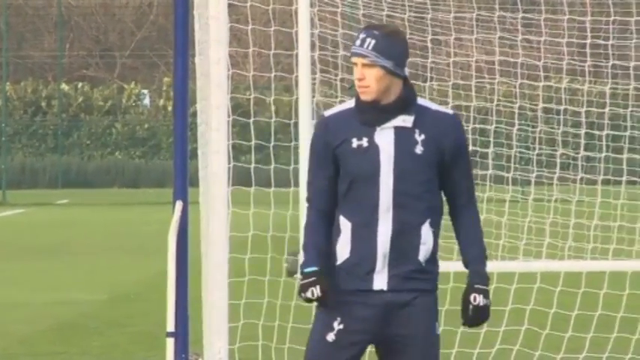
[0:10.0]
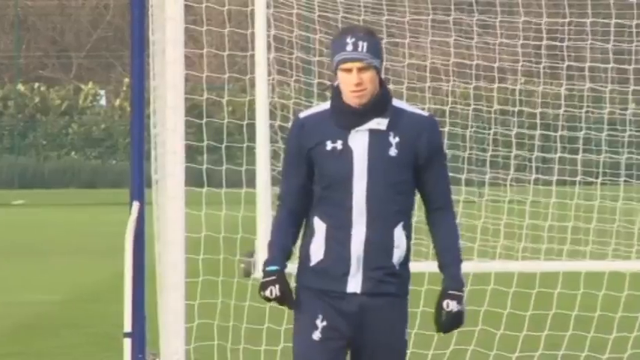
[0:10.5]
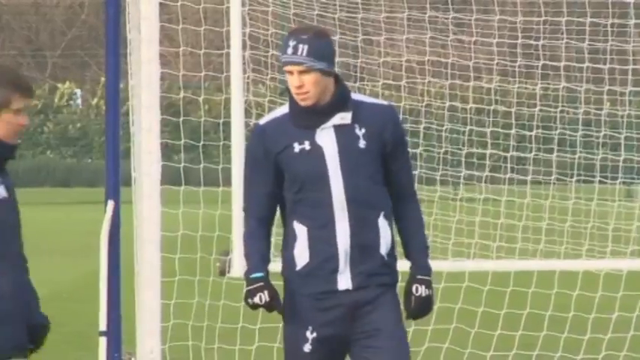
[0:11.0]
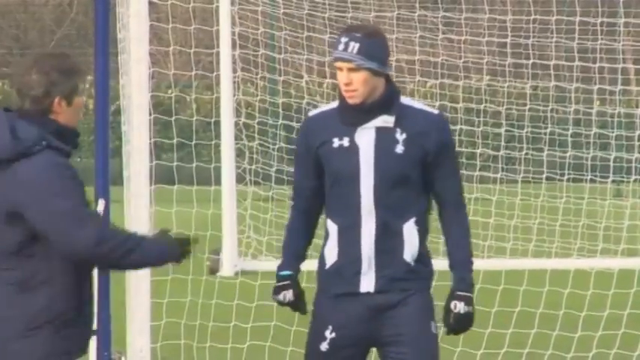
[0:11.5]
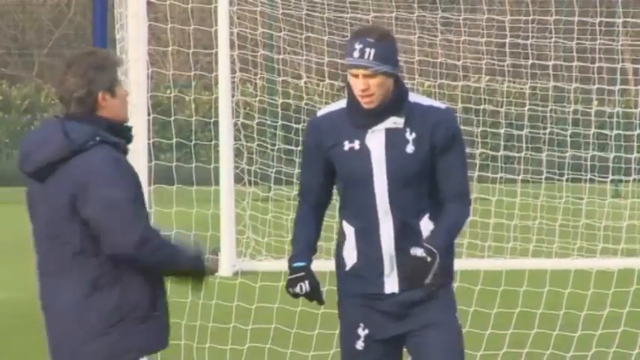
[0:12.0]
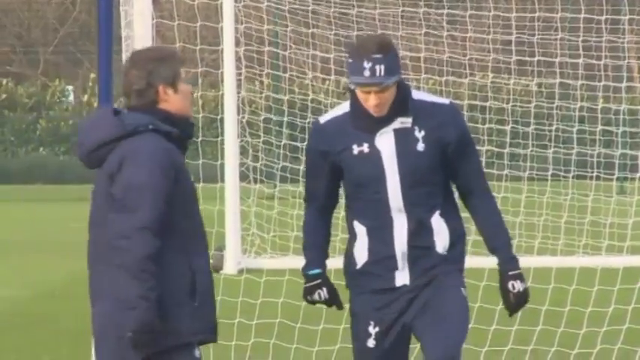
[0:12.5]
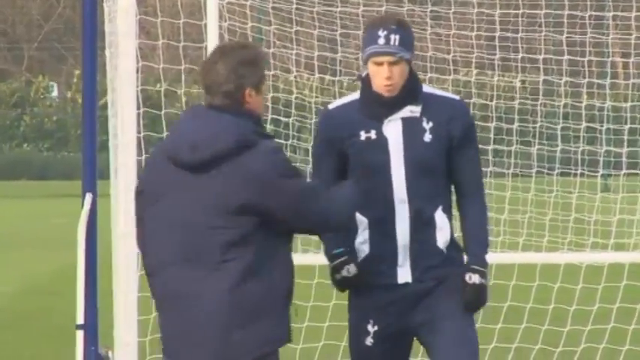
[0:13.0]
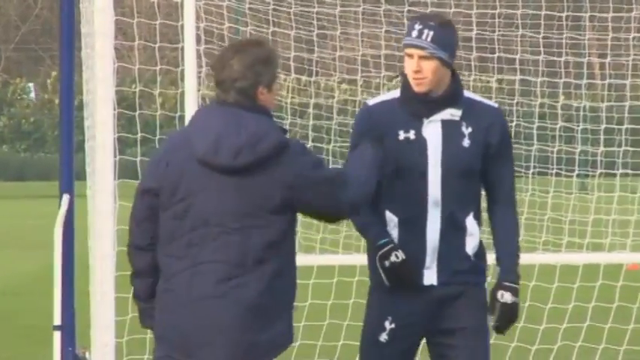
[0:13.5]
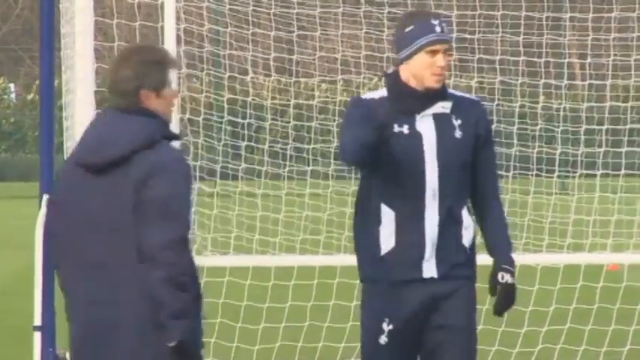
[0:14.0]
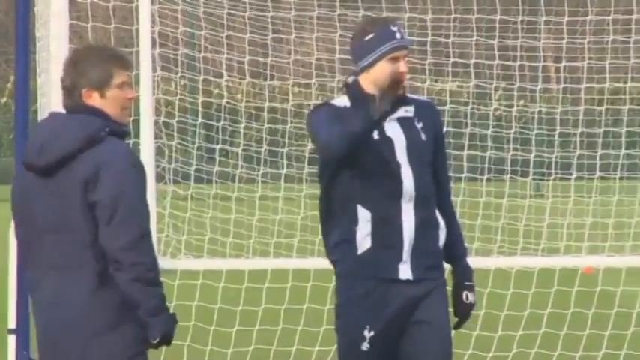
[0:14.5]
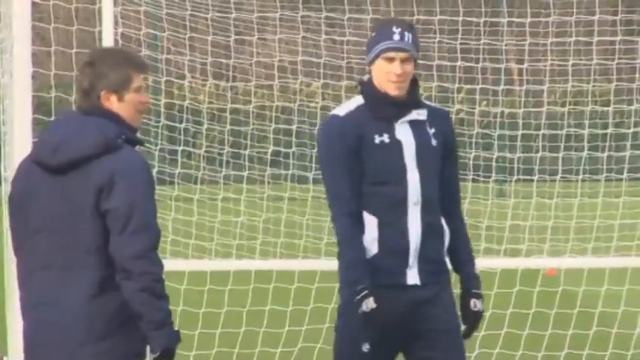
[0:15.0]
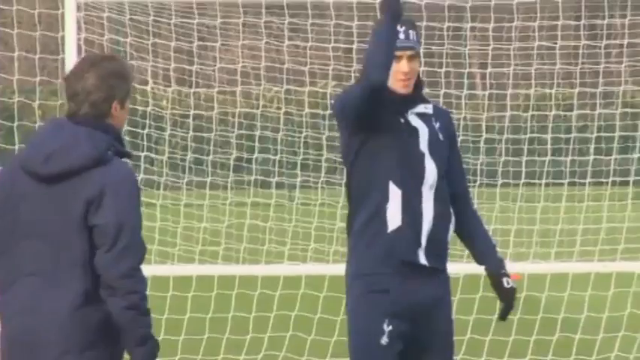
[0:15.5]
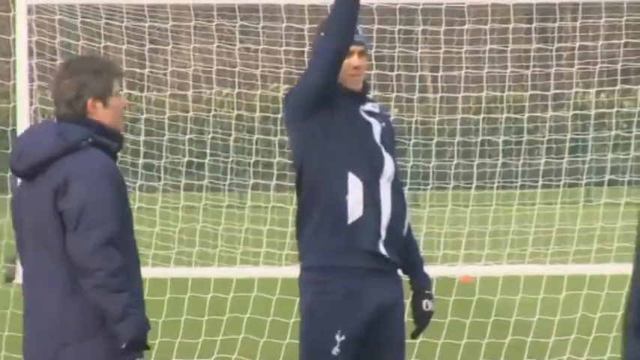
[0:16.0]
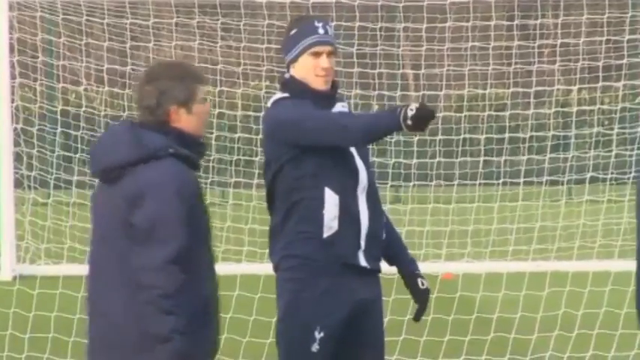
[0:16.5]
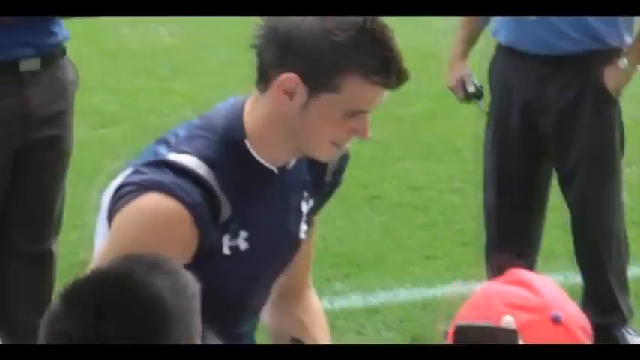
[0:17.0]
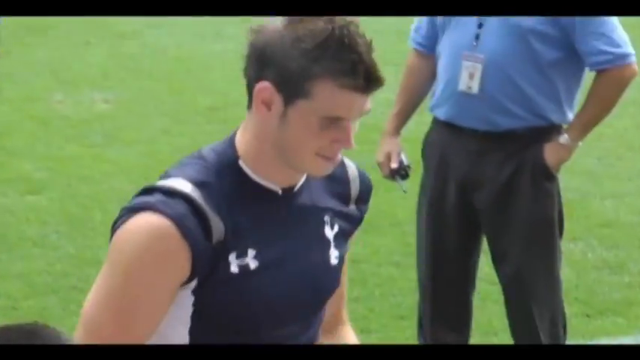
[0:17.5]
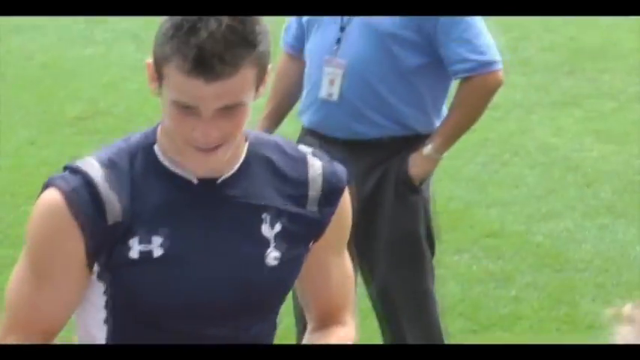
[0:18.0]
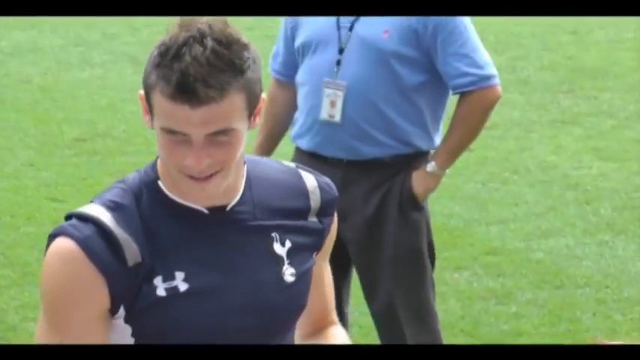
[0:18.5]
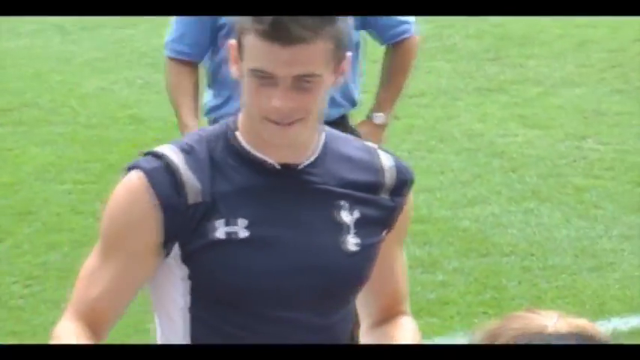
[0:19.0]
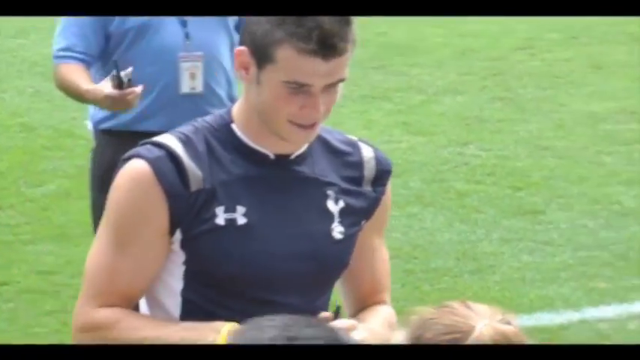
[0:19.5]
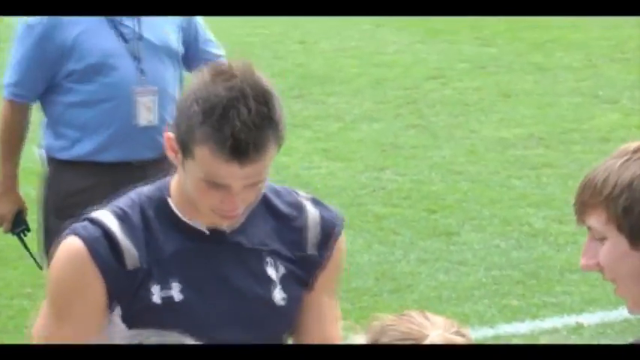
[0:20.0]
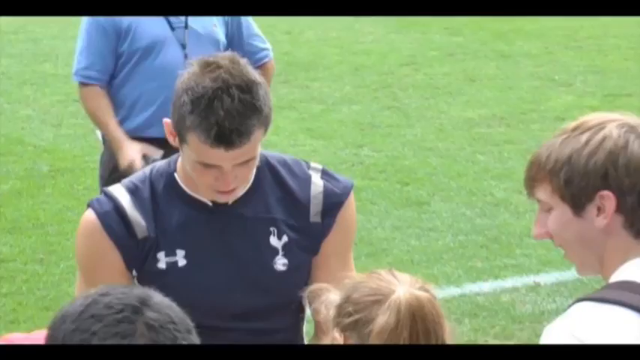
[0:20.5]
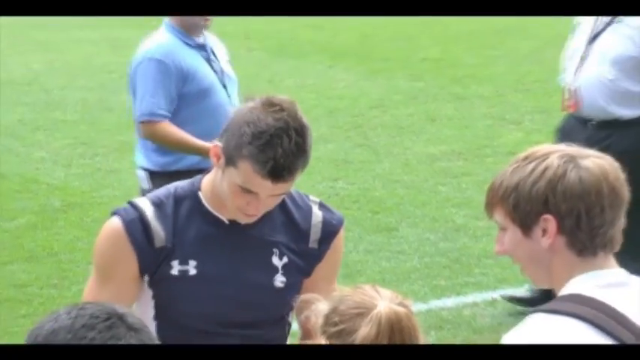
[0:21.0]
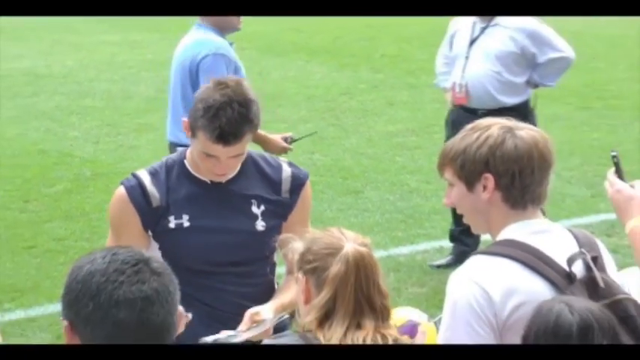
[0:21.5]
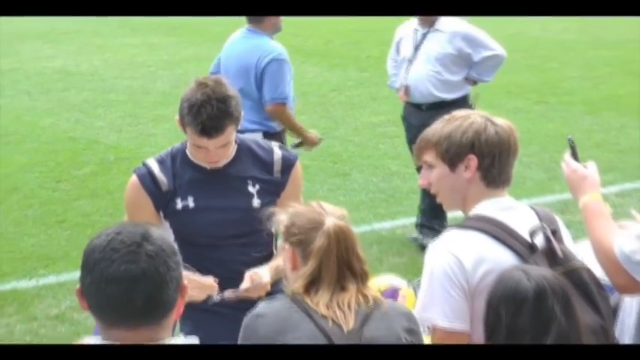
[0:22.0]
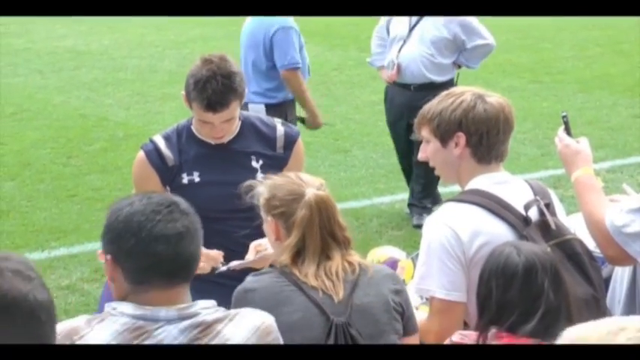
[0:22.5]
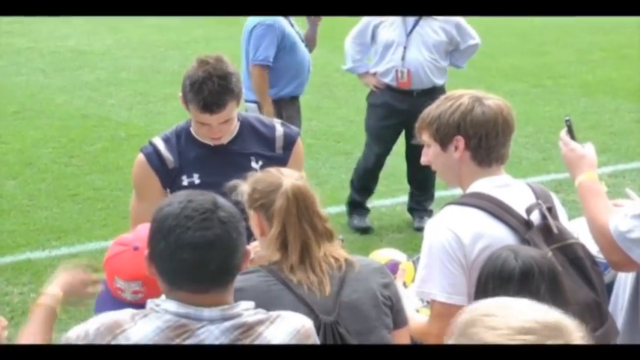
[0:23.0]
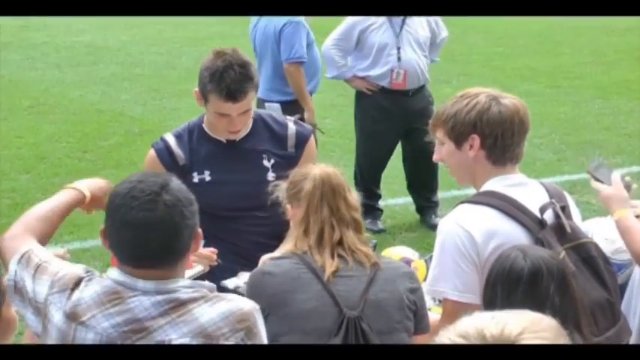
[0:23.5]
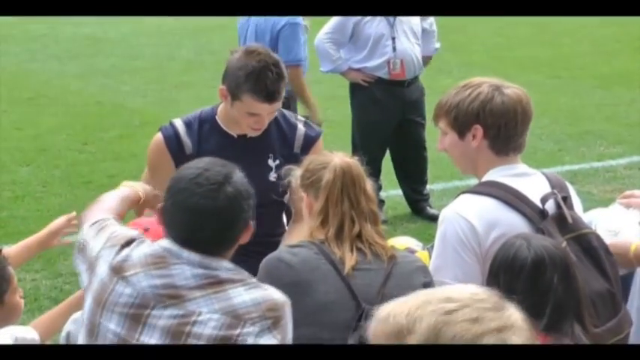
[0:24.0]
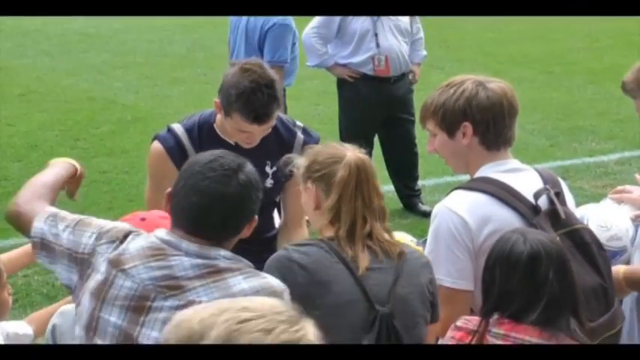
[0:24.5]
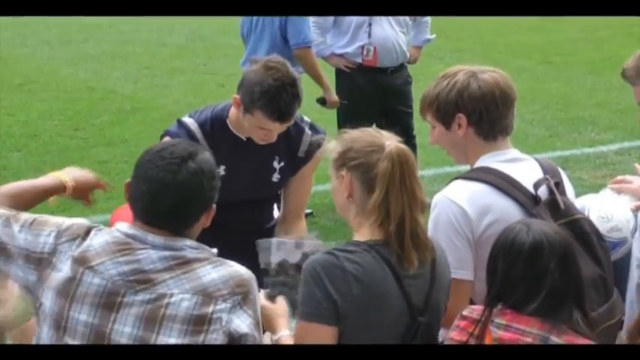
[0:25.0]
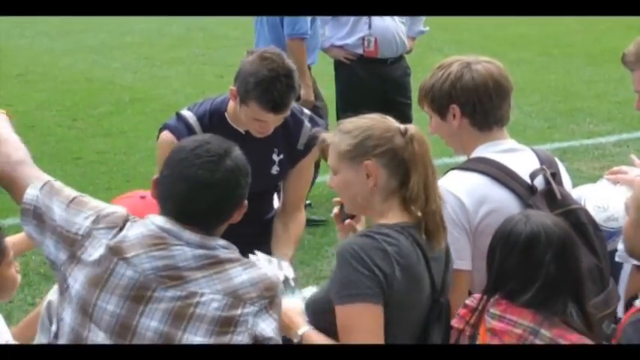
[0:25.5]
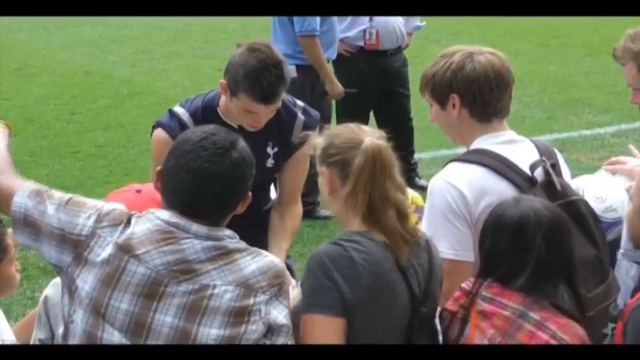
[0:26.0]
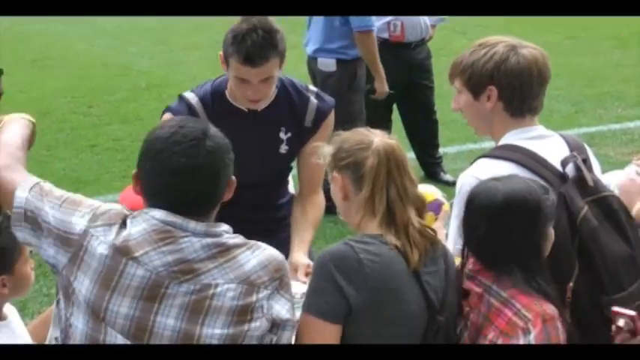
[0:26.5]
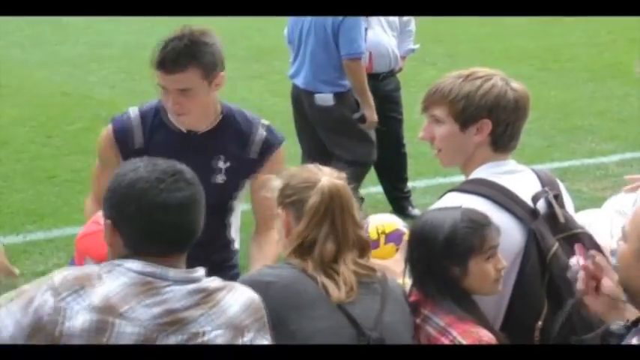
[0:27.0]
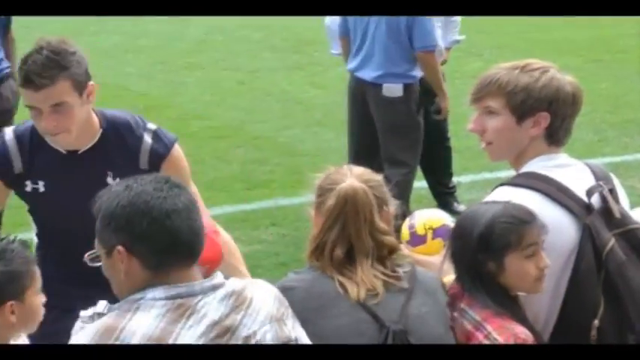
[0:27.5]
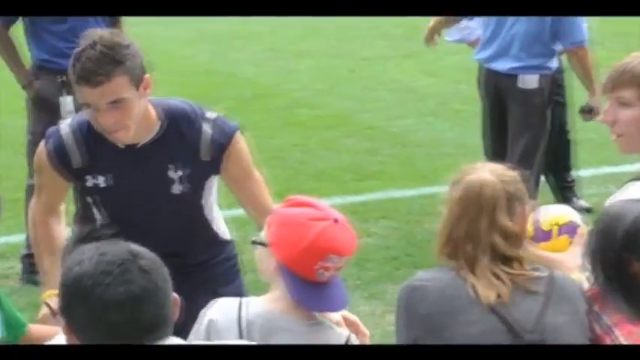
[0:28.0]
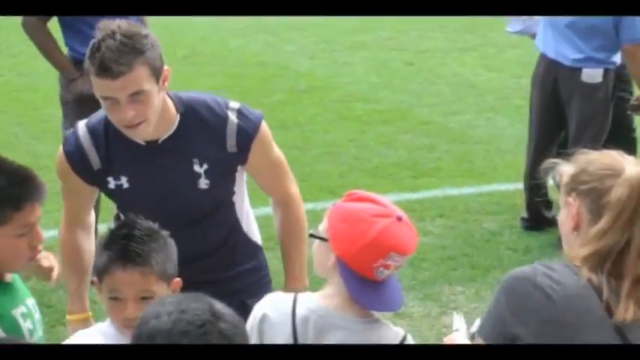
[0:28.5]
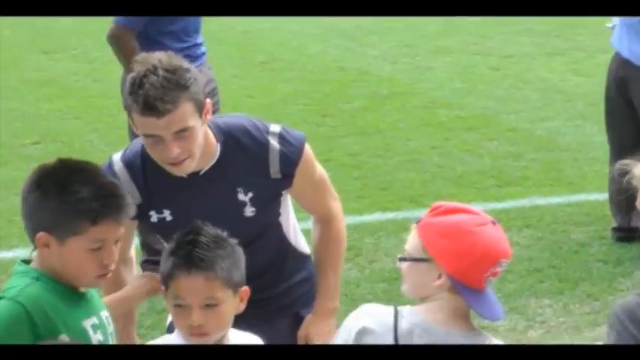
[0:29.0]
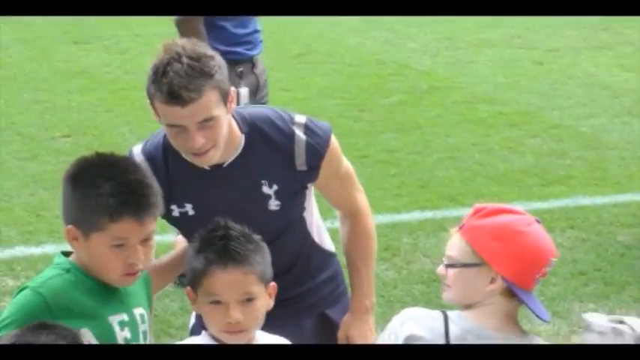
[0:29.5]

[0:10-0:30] The goal net is visible in the background. A young Gareth Bale gestures with his hands towards the other man, and the two talk to each other. He raises his hand up and down, brings it up, then points forward. The video then cuts to another time: Bale, in a sleeveless Tottenham shirt in the same dark blue and white colours, is at the side of the pitch with fans, signing autographs for a group of mostly teenagers and kids, along with some younger adults. Some of them, with their backs to the camera, want an autograph, and some want a picture. As he goes to take a picture with a kid in a green shirt, the shot ends. In the background, two men, probably security, are by the sideline talking; they have big stomachs.